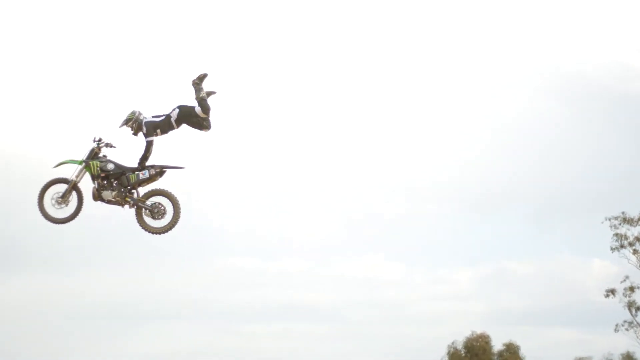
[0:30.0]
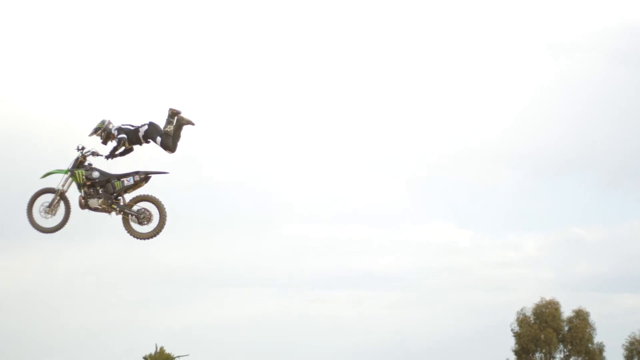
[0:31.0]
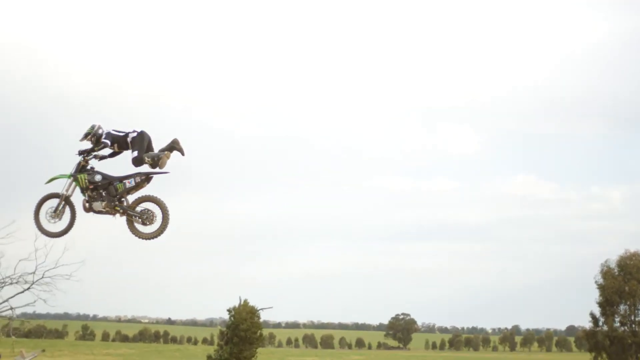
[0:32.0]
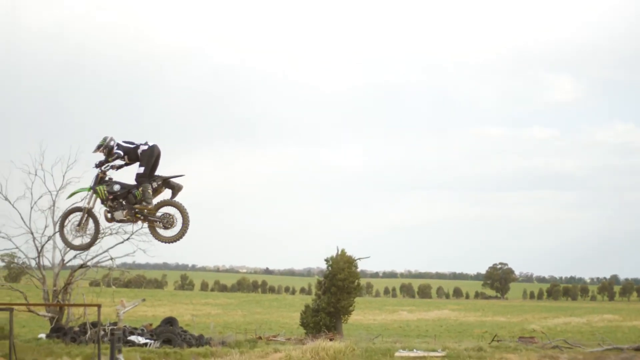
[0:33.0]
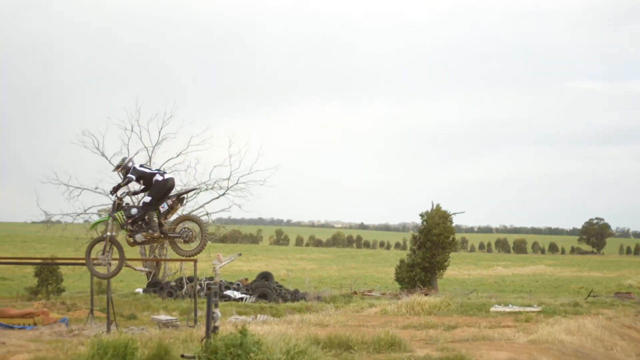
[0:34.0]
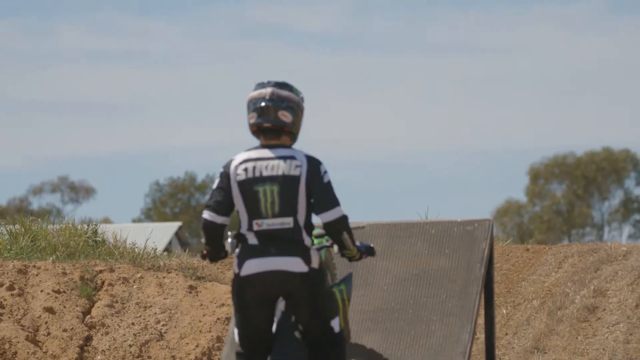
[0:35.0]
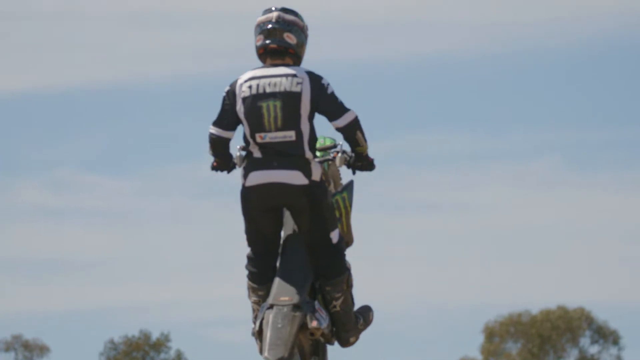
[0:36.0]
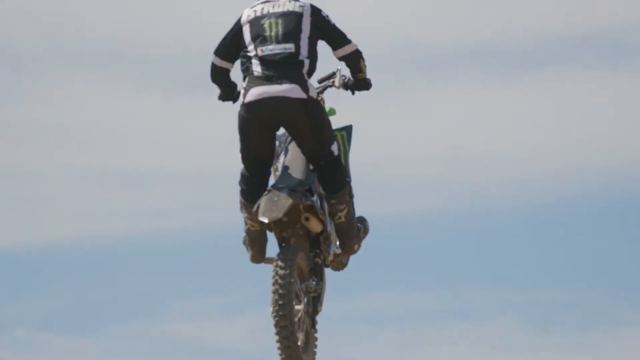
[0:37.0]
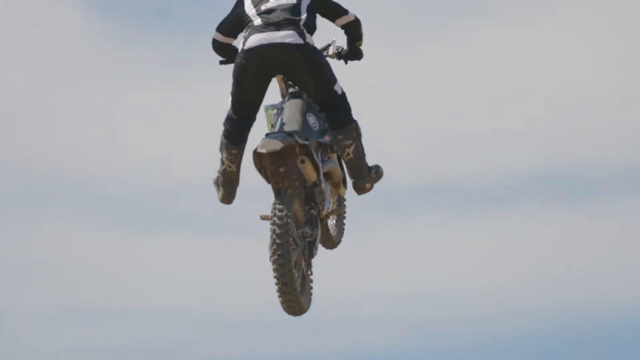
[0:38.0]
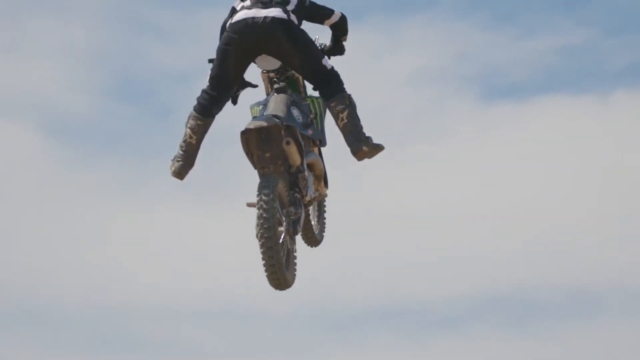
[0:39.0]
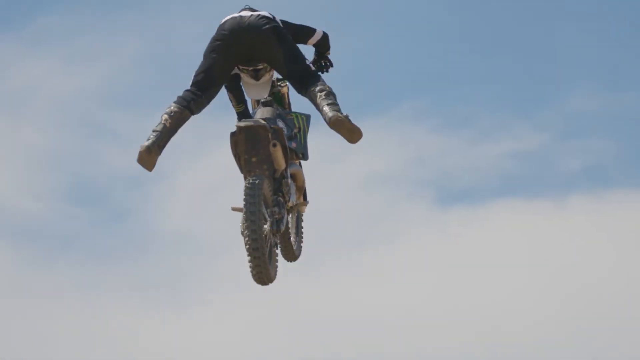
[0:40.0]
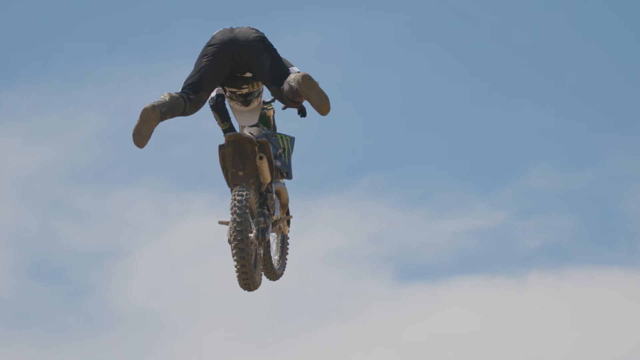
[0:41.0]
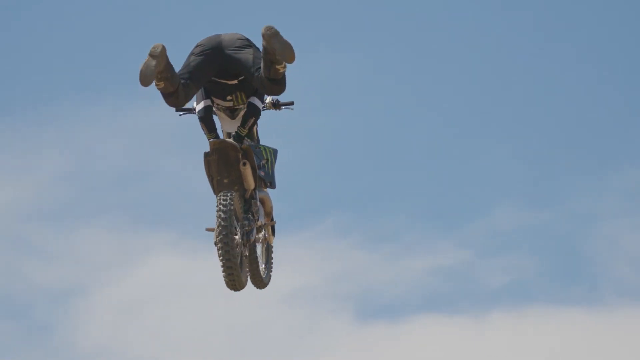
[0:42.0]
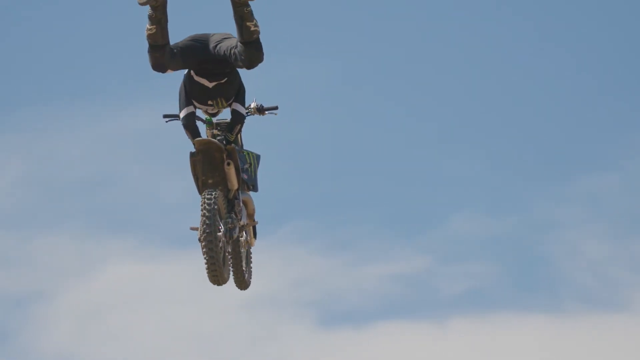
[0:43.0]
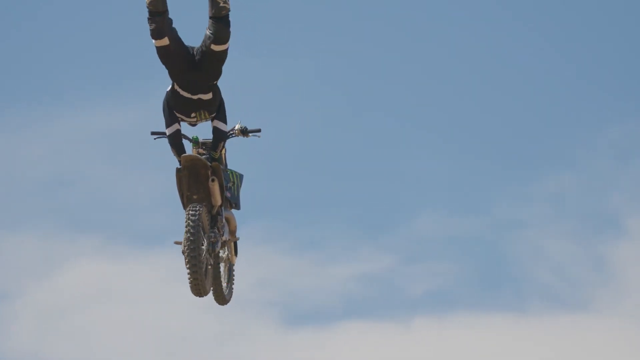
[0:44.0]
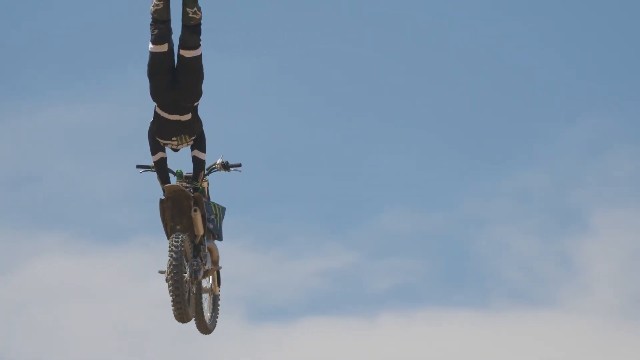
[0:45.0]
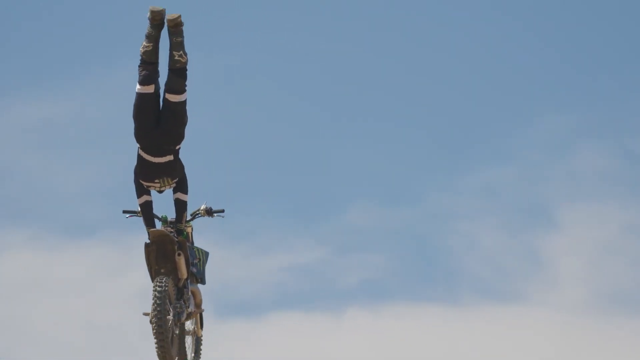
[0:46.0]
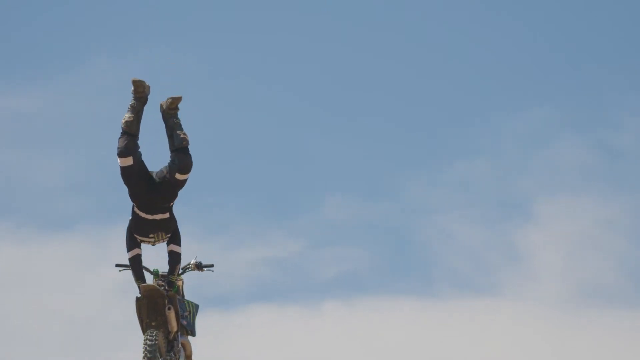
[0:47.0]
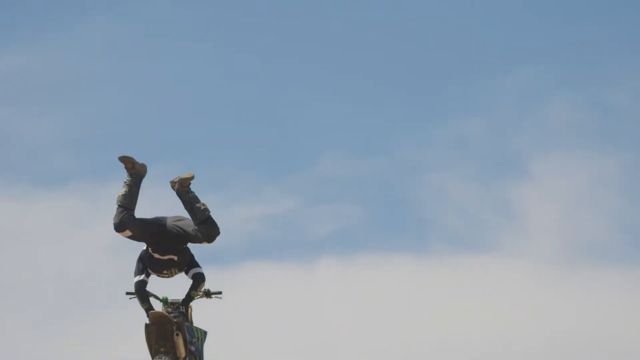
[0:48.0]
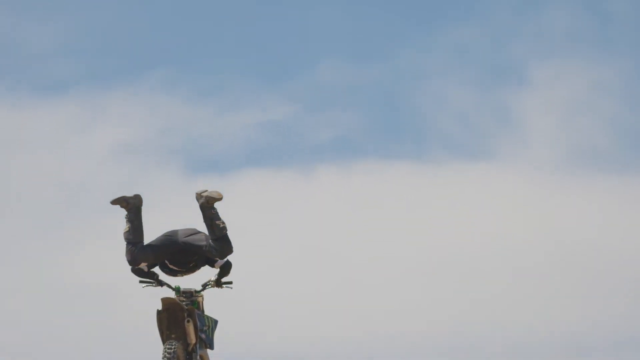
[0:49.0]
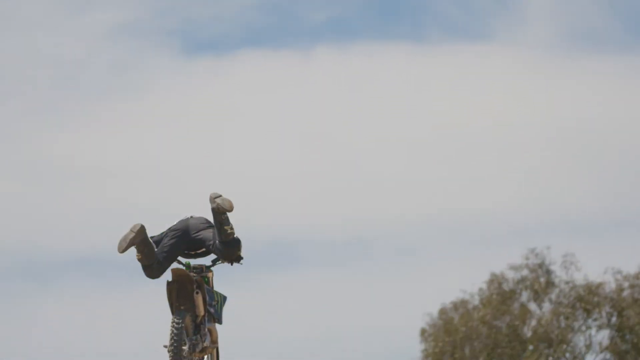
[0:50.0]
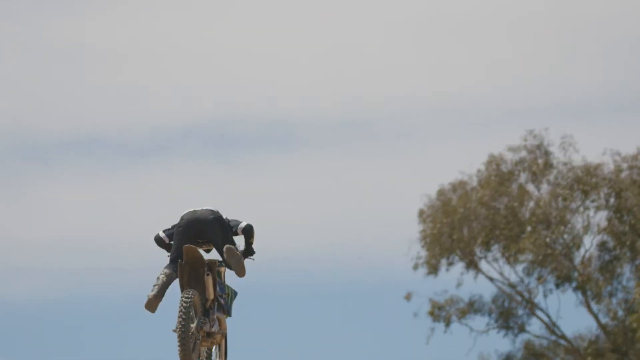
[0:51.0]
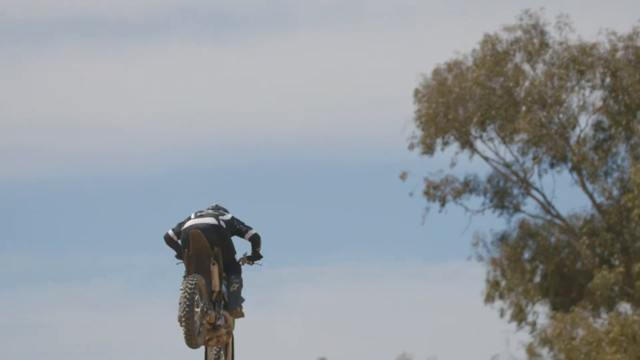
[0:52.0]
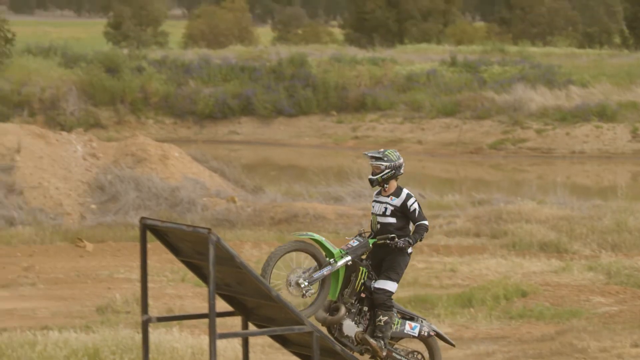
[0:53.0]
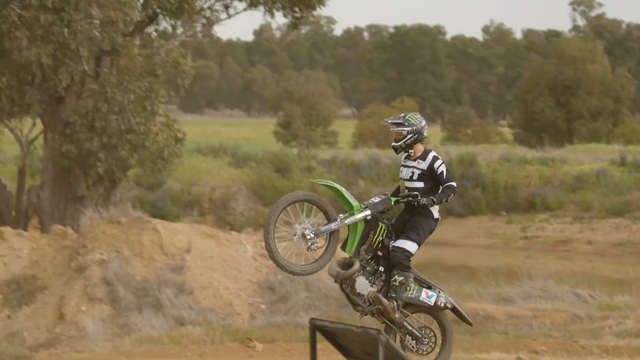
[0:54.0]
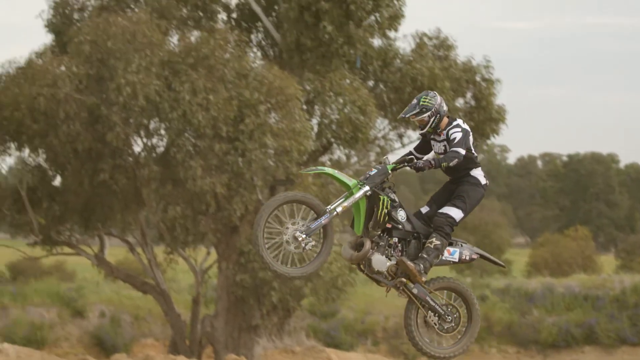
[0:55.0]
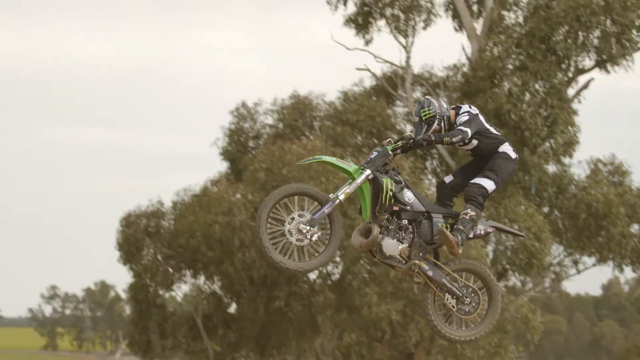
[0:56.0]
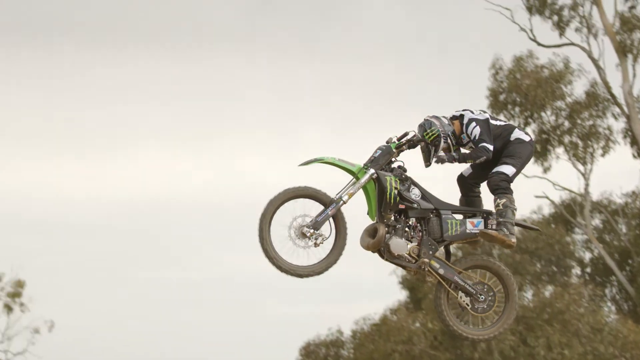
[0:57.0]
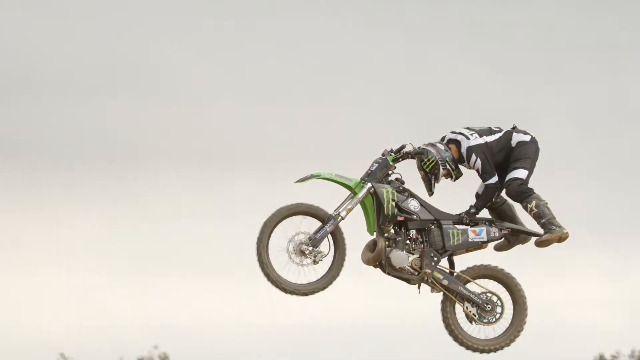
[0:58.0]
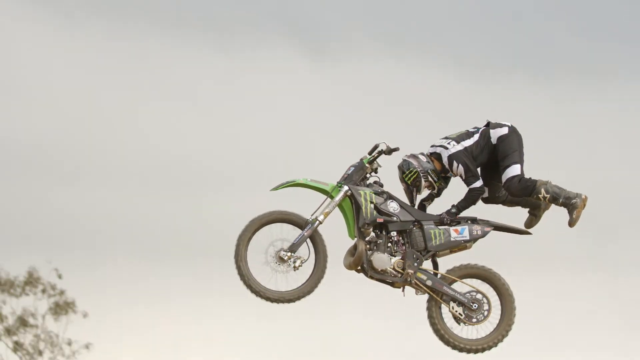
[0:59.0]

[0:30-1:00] As the bike comes down, he pushes himself forward and drops his weight with his knees bent, grabs the handlebars, and comes down onto the bike with a leg on each side. The view then shows the cyclist from behind as he takes off, closer up: his left hand grips the seat, then his right hand, and his knees go up and extend as if he is free falling. He lets go, grabs the handlebars while lowering his body, and gets into position with his back flat and bent and his legs coming down the sides. Another angle from the side shows him reaching the top in slow motion, pushing off and keeping his head very straight.